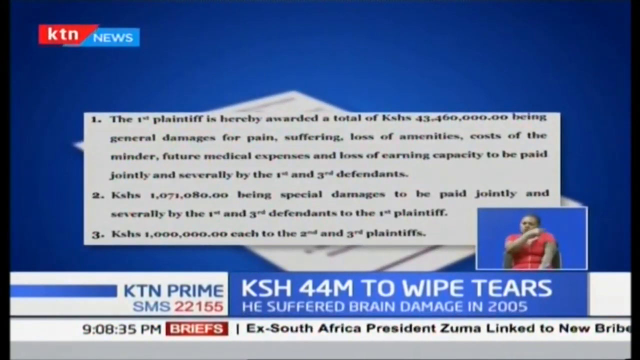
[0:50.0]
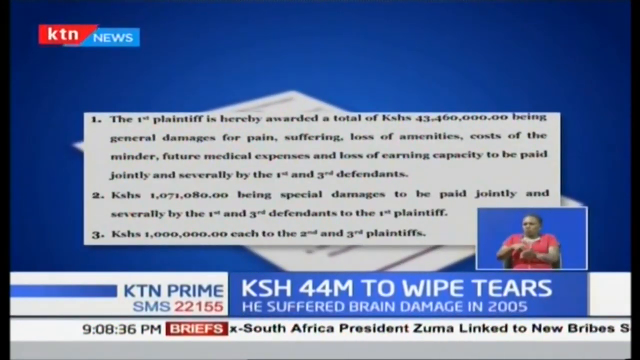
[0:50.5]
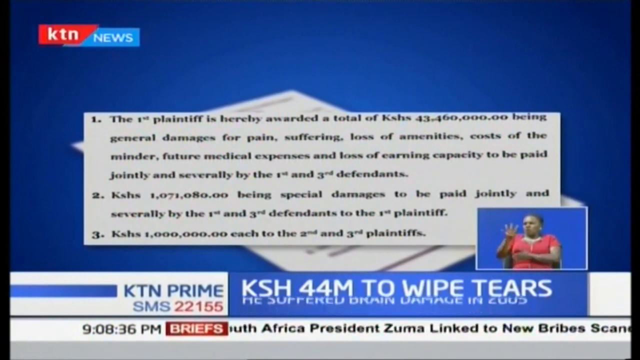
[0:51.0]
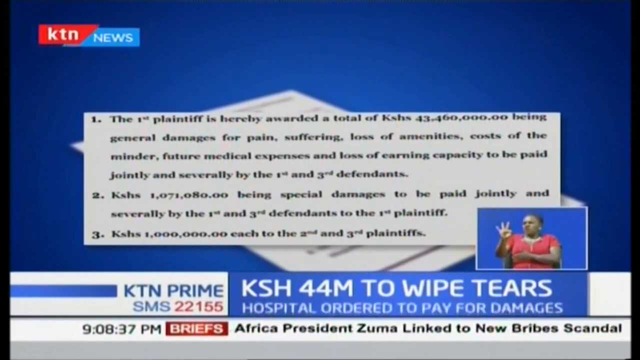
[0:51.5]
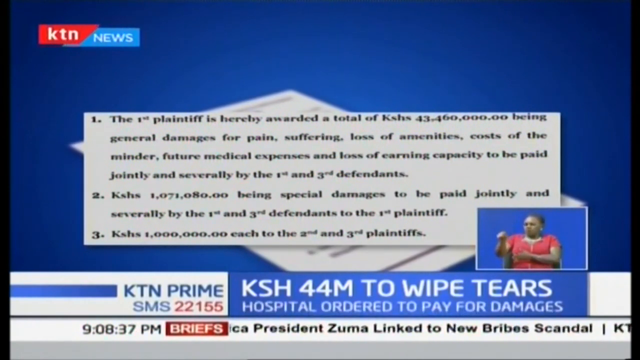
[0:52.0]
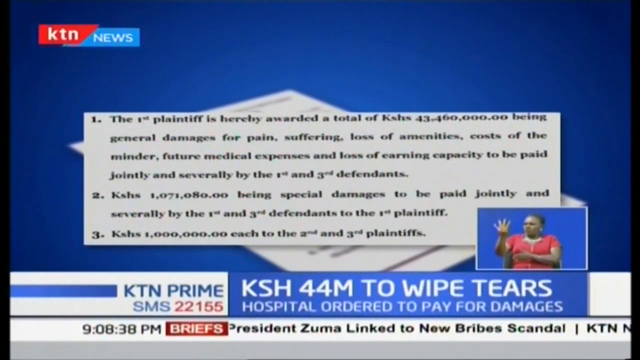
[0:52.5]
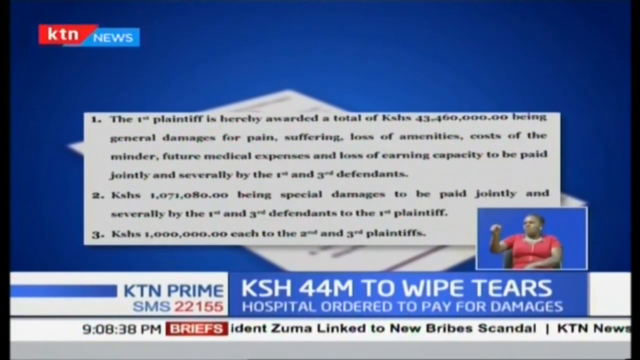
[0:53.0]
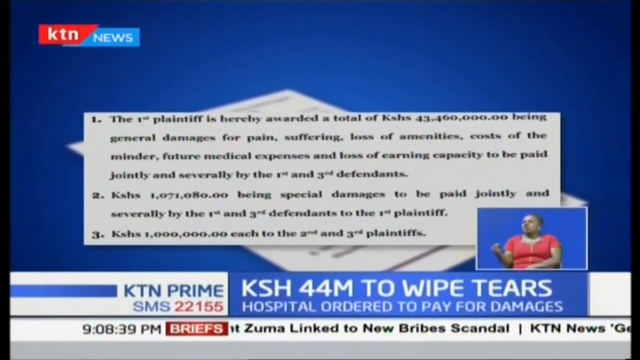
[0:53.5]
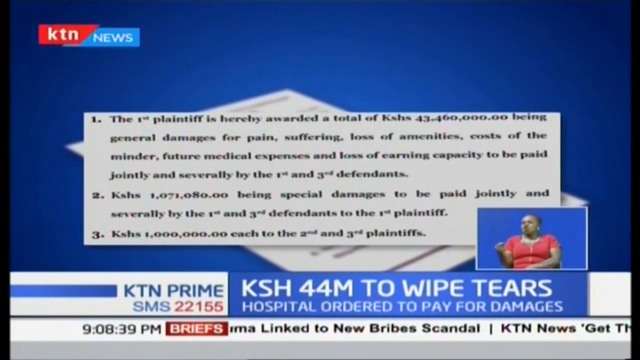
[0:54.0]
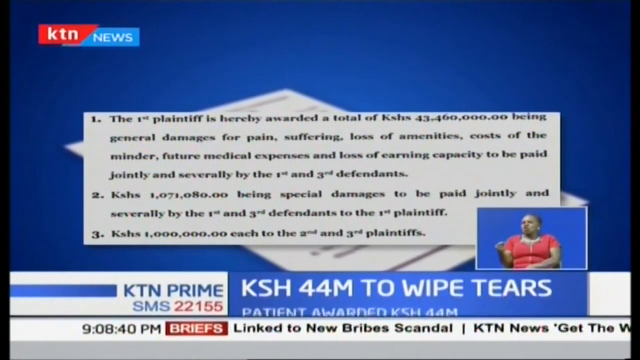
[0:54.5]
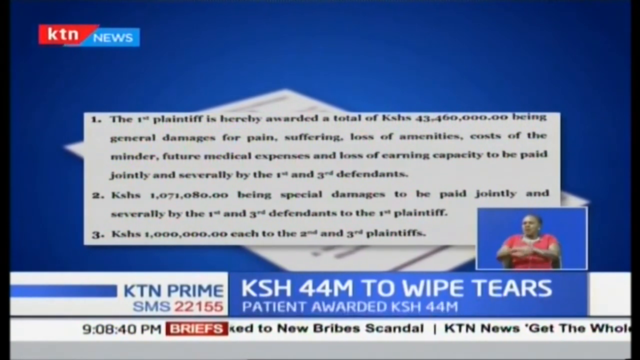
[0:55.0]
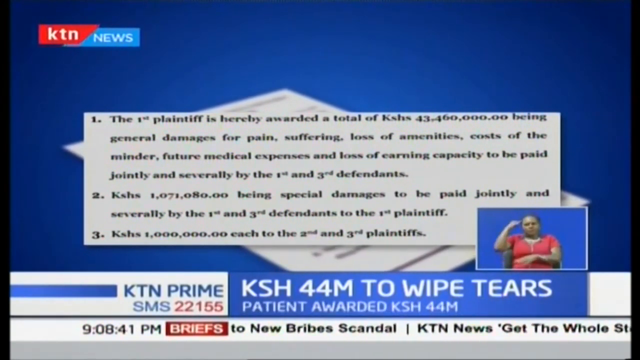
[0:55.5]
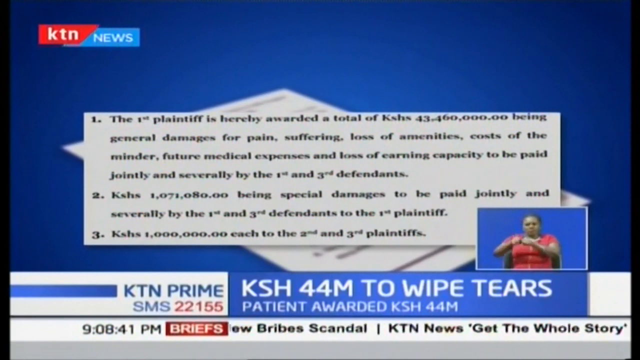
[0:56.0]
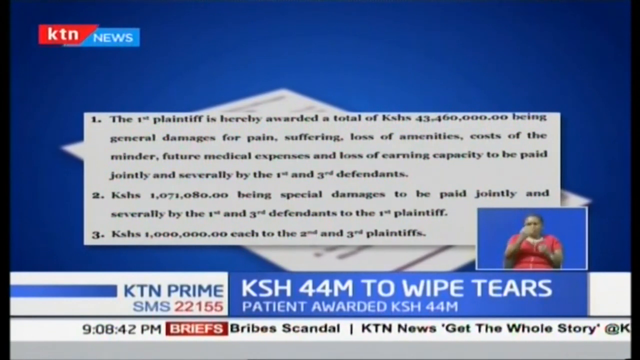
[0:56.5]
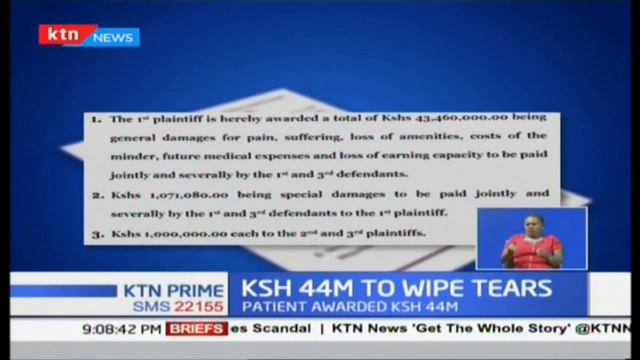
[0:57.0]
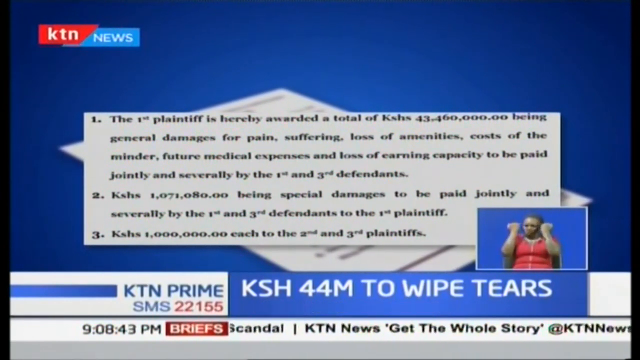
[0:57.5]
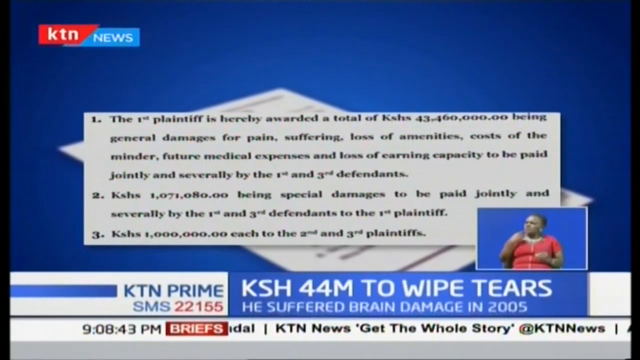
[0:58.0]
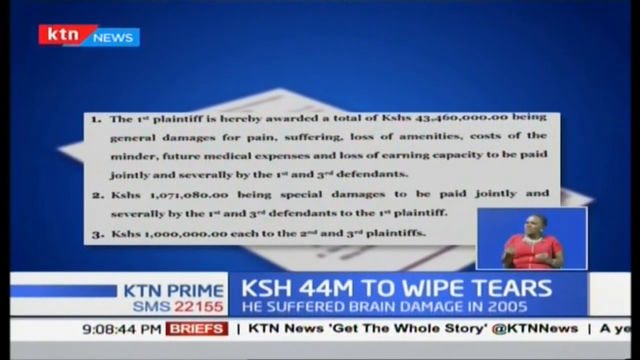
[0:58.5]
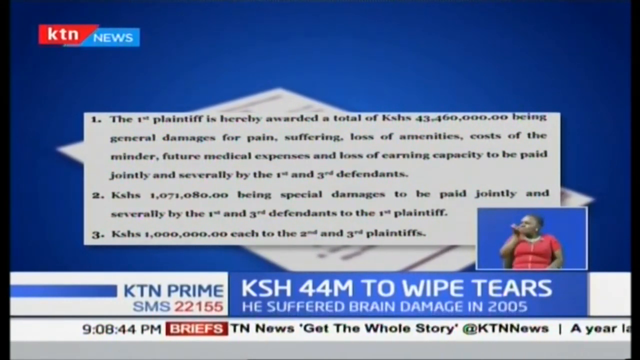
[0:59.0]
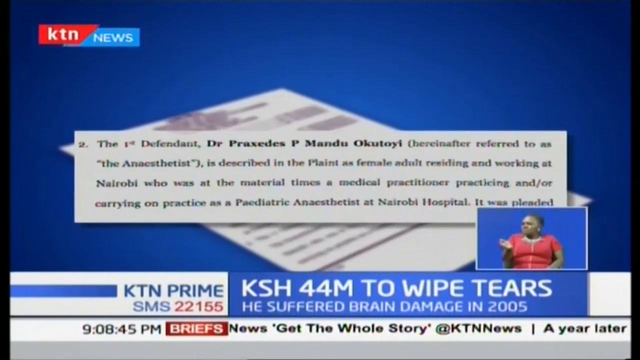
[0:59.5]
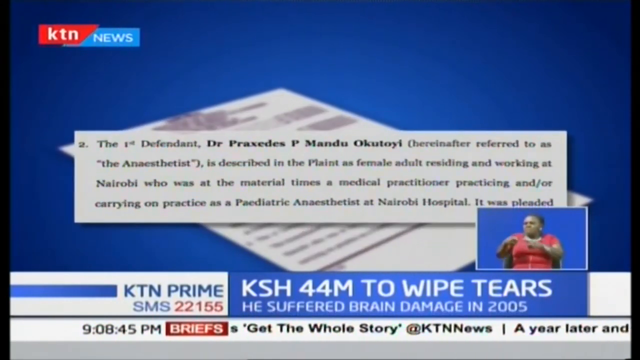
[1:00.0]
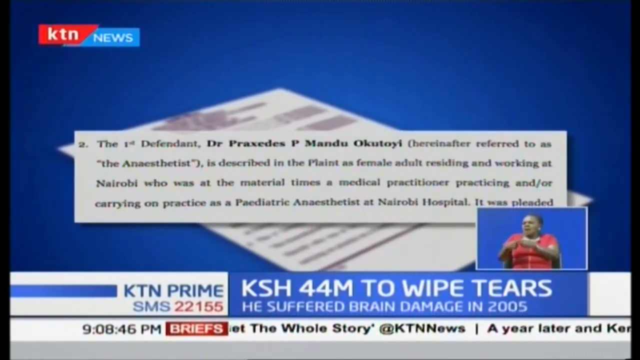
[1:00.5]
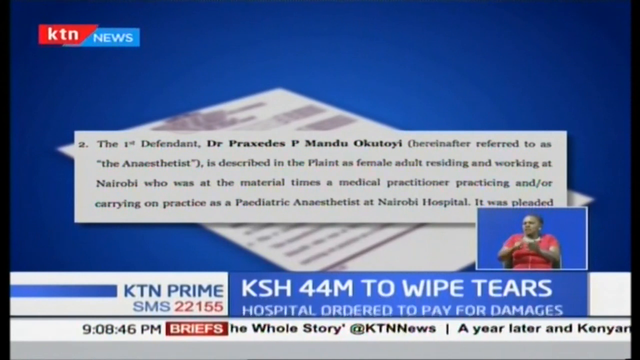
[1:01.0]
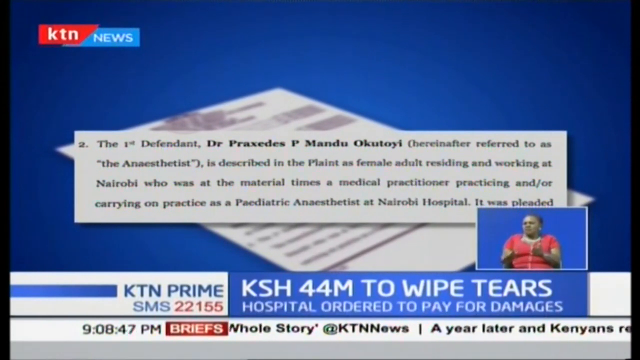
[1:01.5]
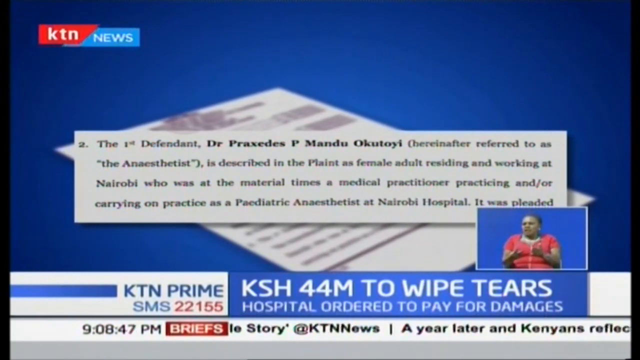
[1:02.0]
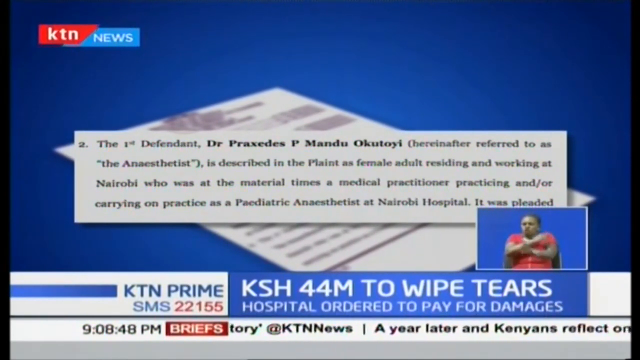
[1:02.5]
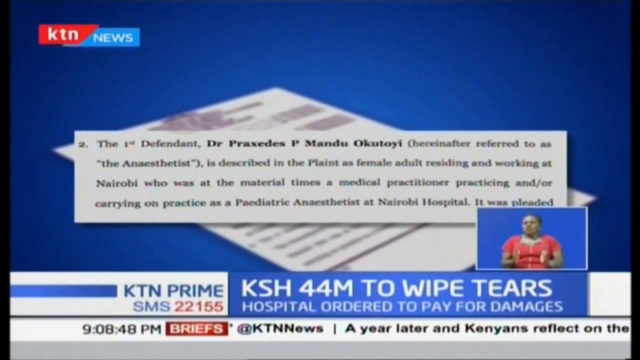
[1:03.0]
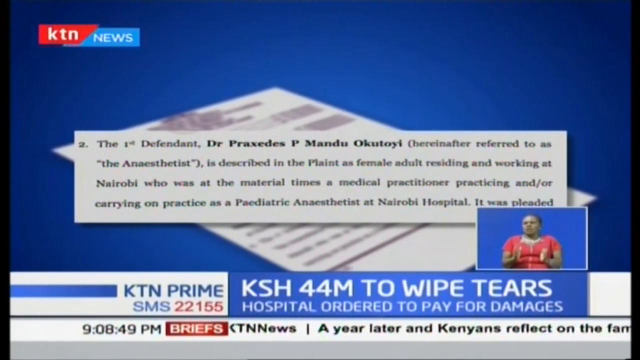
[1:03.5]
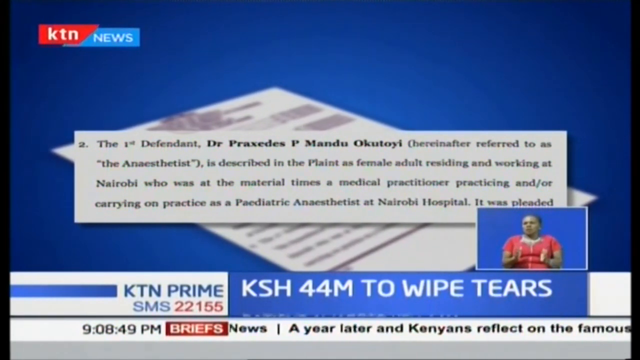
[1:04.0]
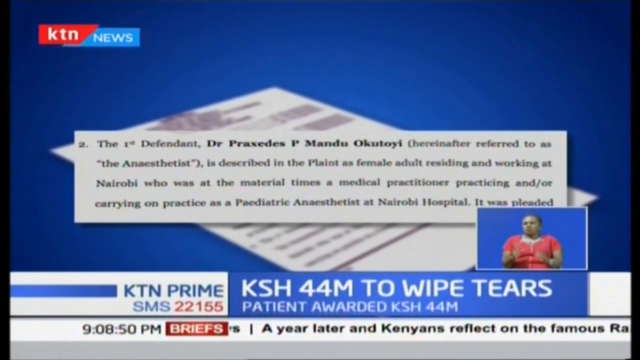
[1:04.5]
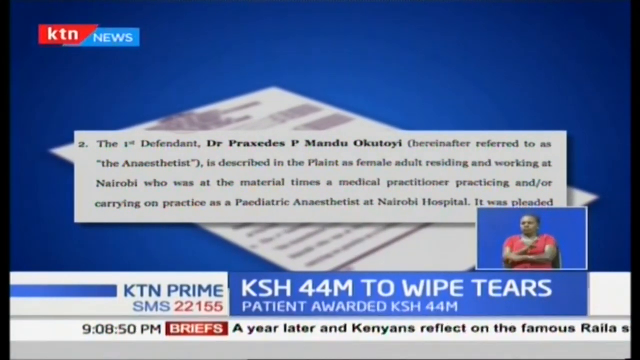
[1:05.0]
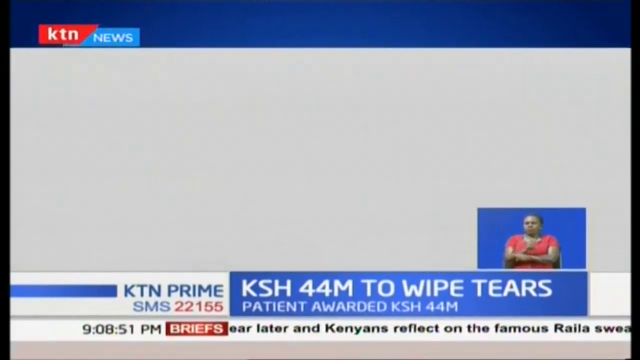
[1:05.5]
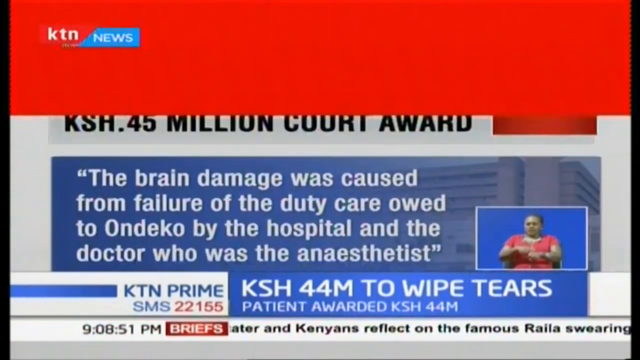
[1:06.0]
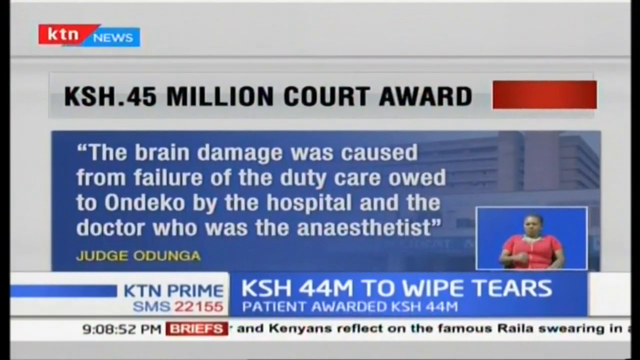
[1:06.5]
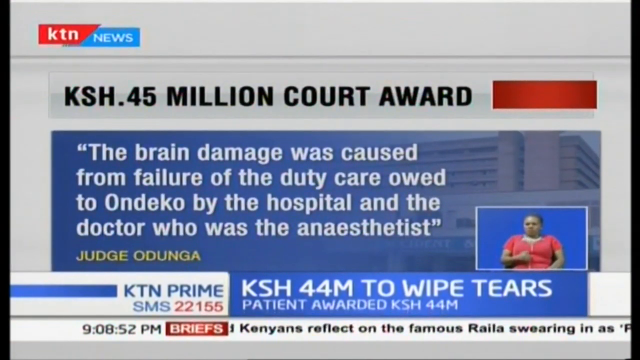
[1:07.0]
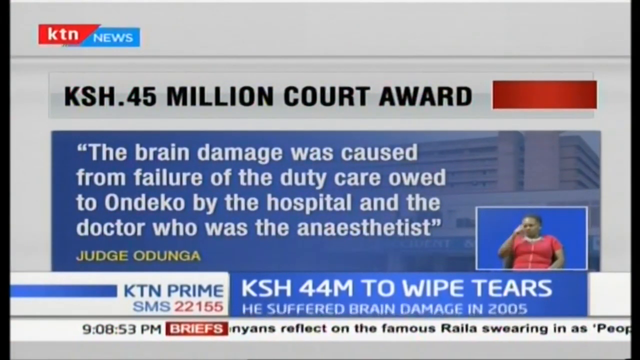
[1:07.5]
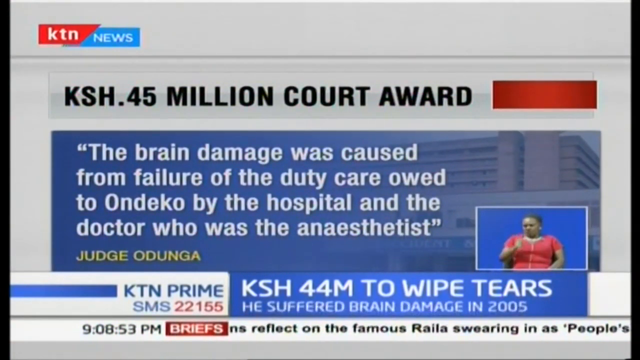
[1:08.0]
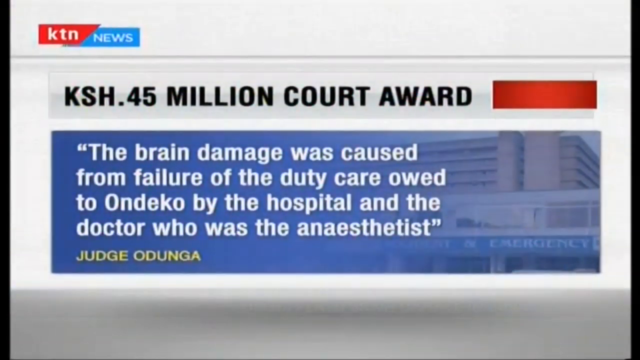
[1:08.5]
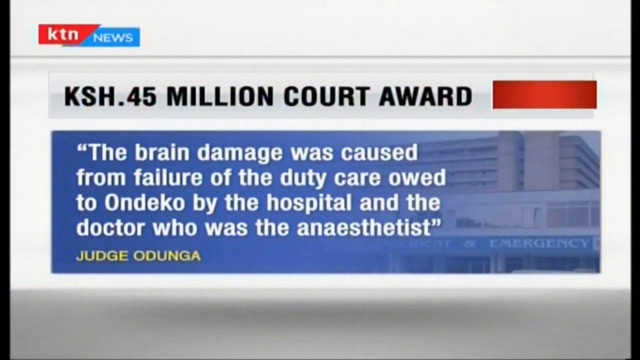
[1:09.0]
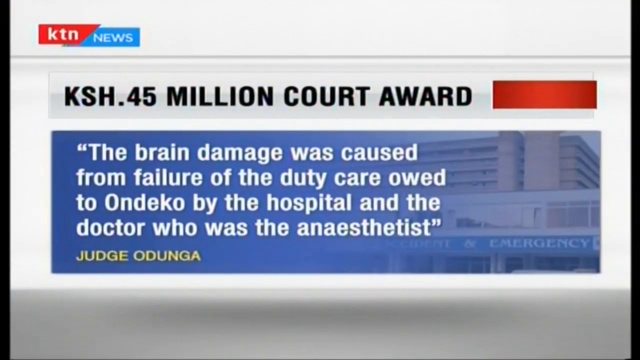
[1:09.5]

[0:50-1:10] A court document lists the various awards the different plaintiffs received in the case concerning a hospital's mistreatment. A woman in the bottom right performs sign language, and the text at the bottom still reads that the hospital is ordered to pay for damages. The document also mentions special damages to be paid jointly and separately. Next it shows that the first defendant, Dr. Praxitis P. Mandu-Oktutoy, is described in the plaint as a female adult residing and working at Nairobi who was at the material times a medical practitioner practicing as a pediatric anesthetist at Nairobi Hospital. The background is a blue gradient with the white court document above it. The time is now 9:08, nearing 9:09. Finally a 45 million KSH court award is shown, stating that Judge Odunga determined the brain damage was caused by failure of the duty of care owed to Ondeko by the hospital and the anesthetist doctor.